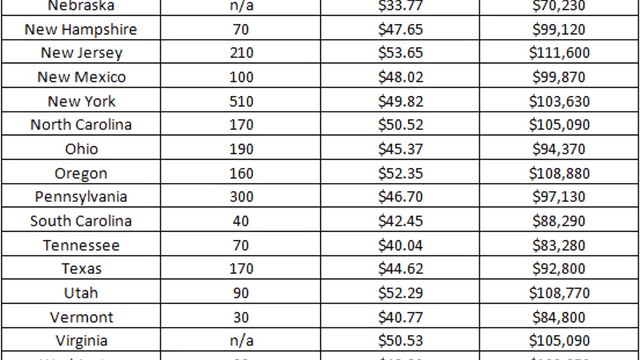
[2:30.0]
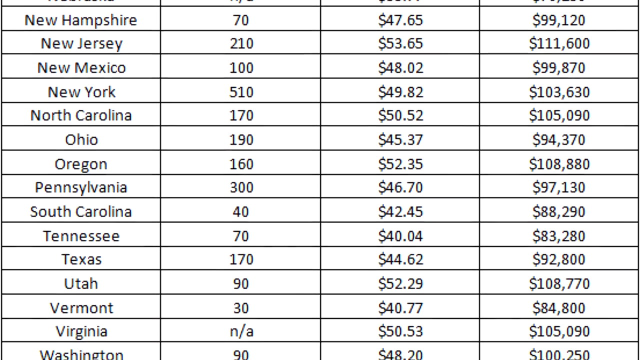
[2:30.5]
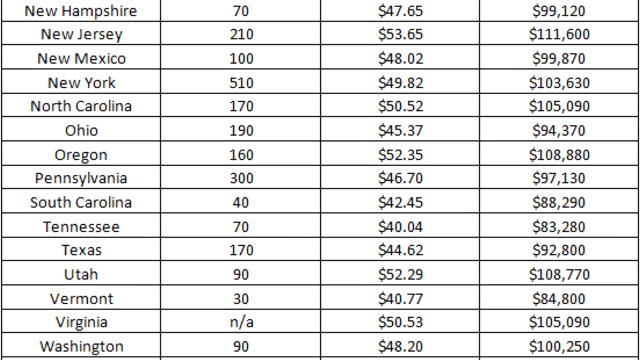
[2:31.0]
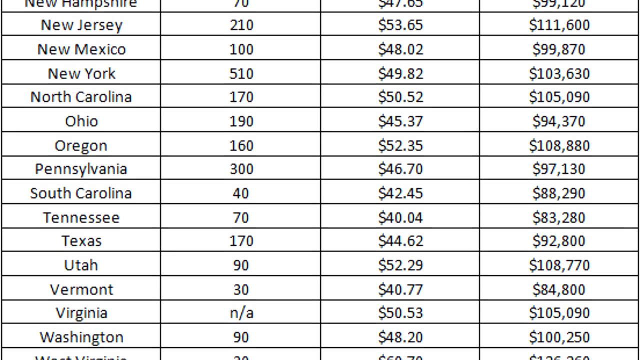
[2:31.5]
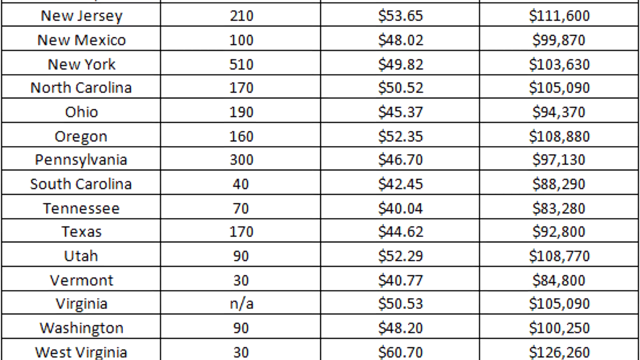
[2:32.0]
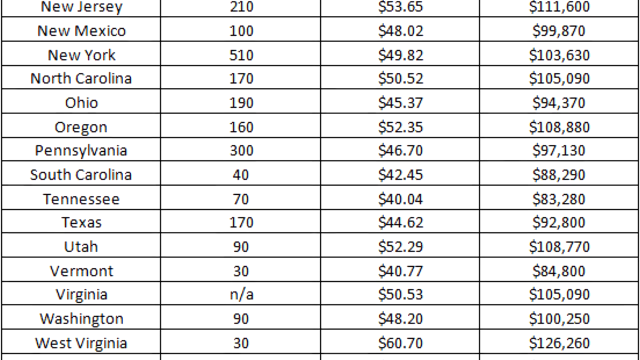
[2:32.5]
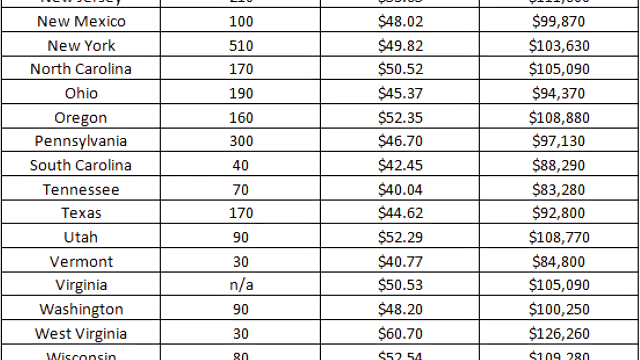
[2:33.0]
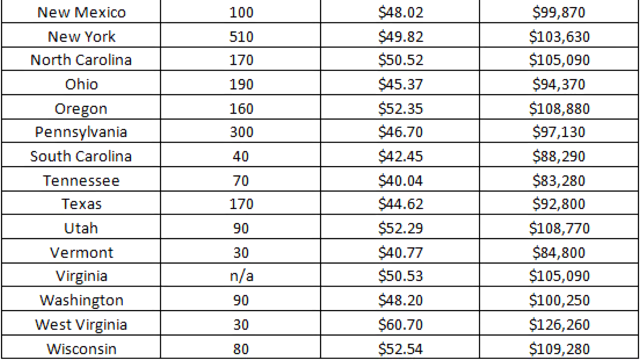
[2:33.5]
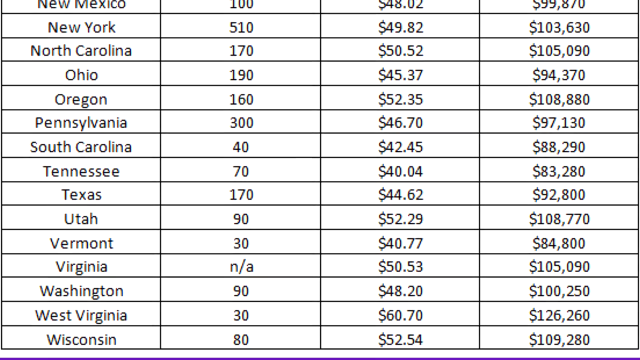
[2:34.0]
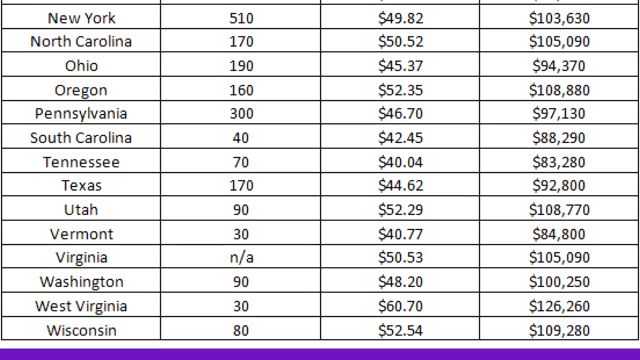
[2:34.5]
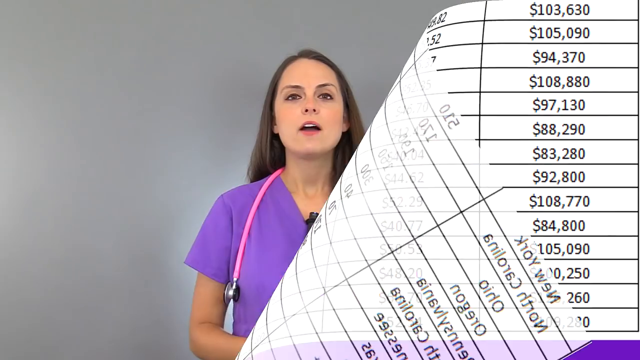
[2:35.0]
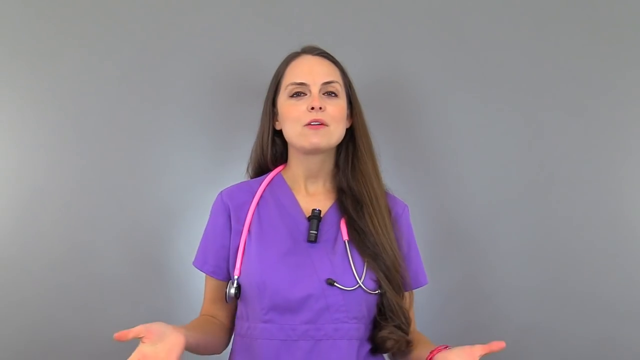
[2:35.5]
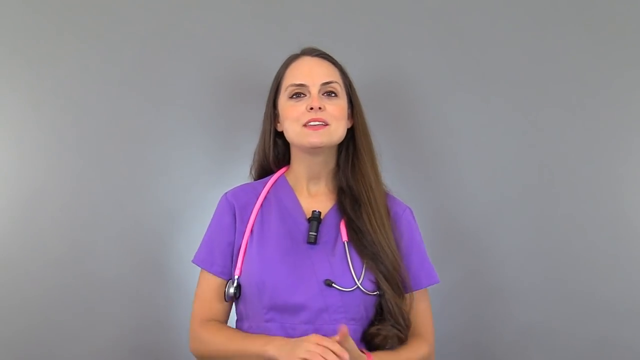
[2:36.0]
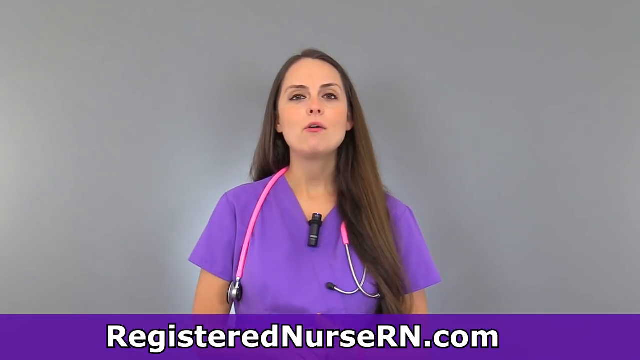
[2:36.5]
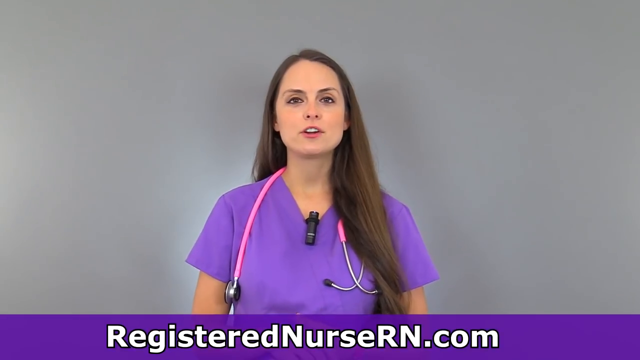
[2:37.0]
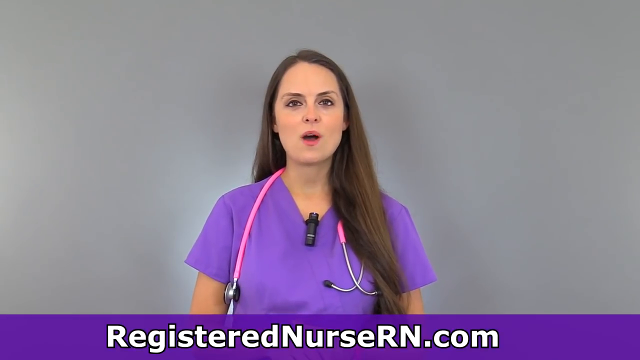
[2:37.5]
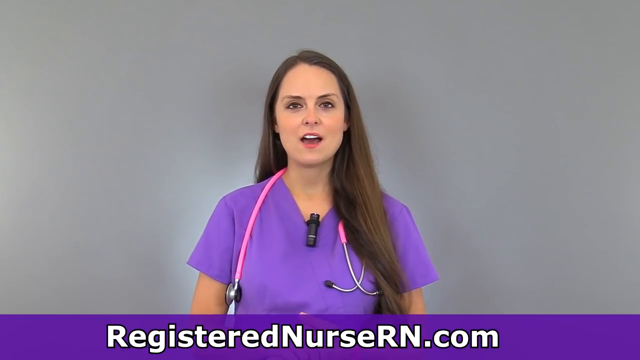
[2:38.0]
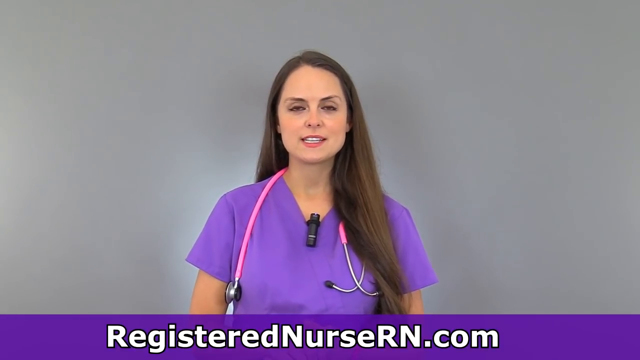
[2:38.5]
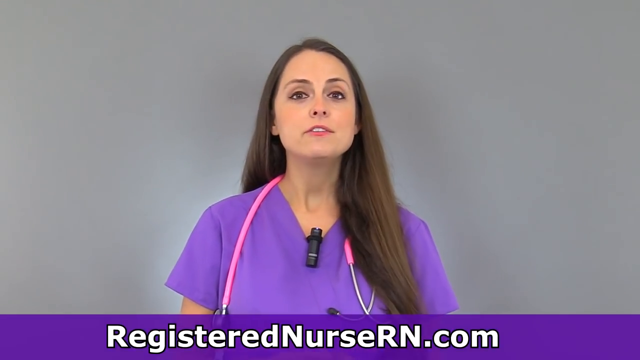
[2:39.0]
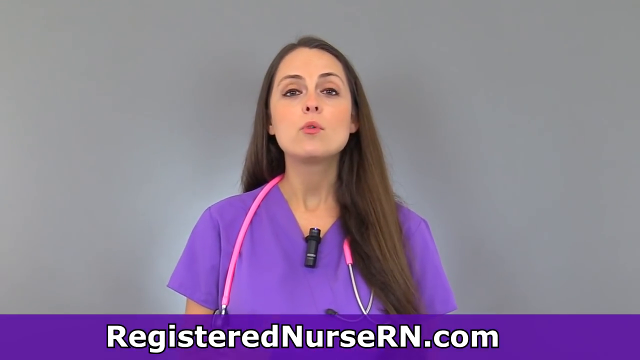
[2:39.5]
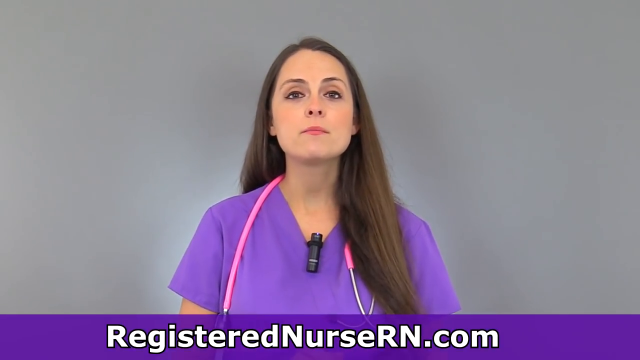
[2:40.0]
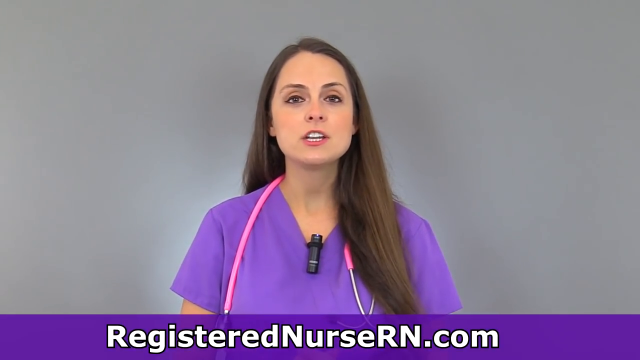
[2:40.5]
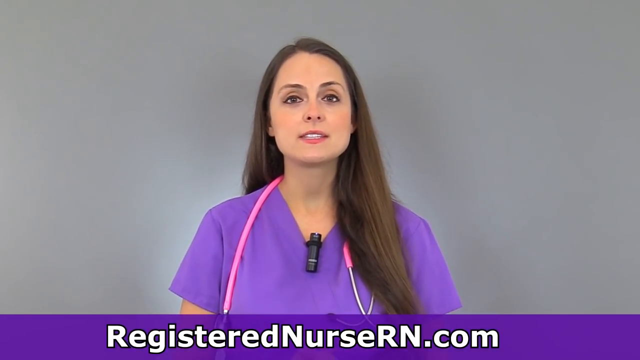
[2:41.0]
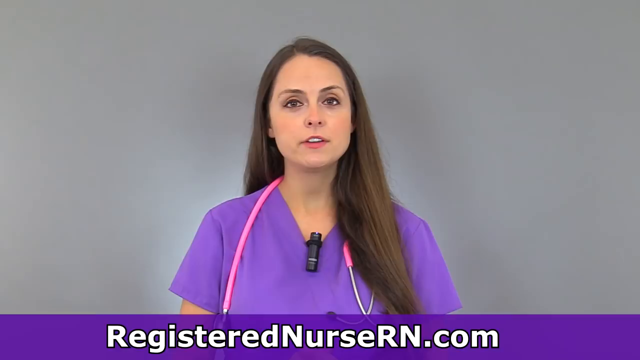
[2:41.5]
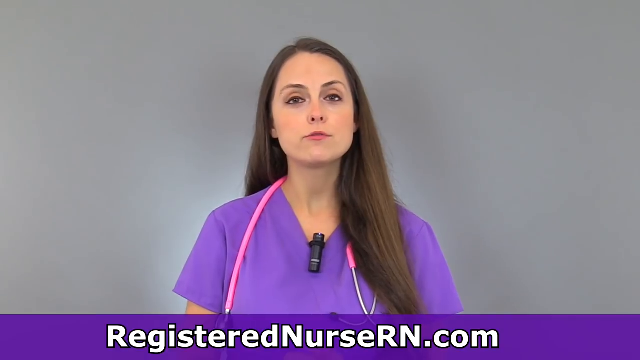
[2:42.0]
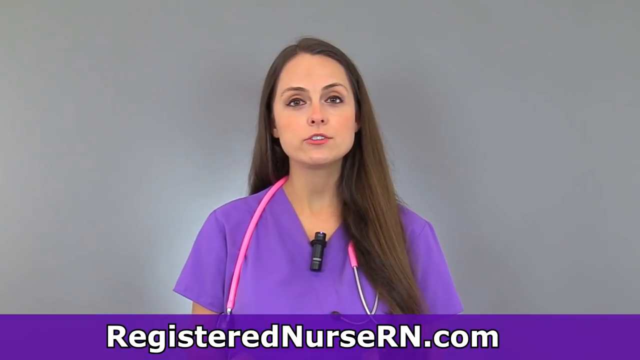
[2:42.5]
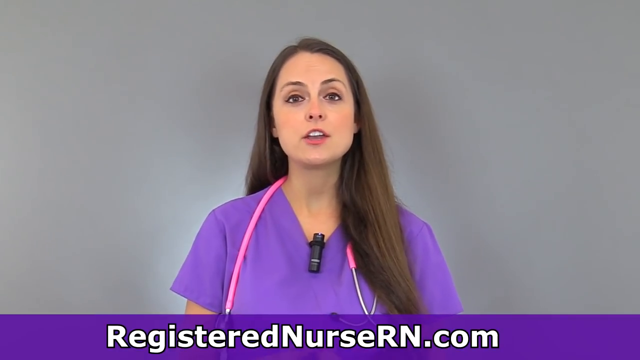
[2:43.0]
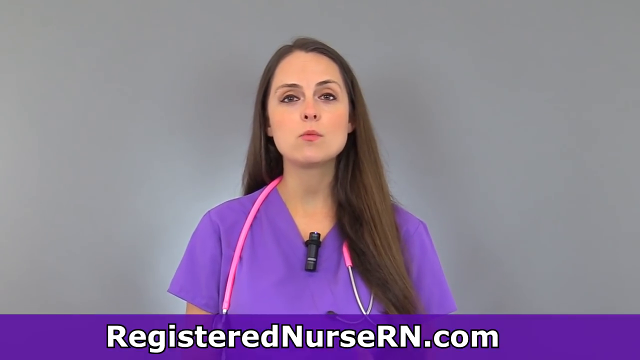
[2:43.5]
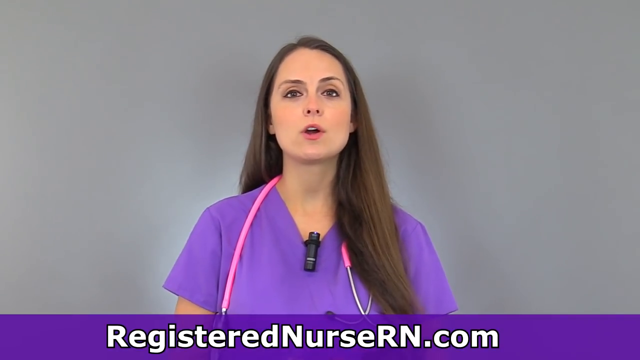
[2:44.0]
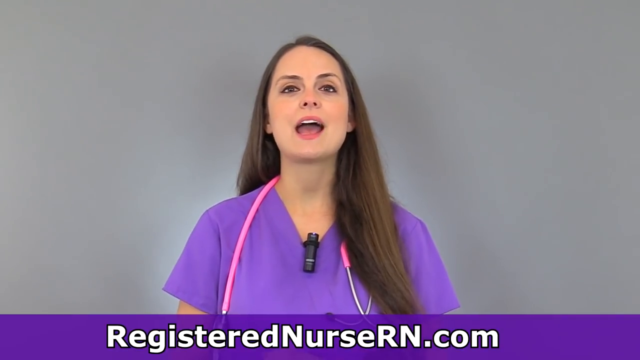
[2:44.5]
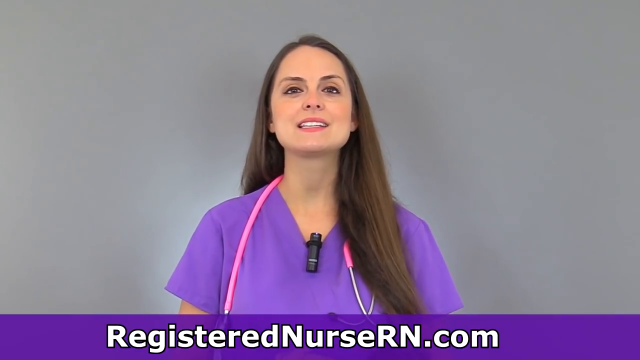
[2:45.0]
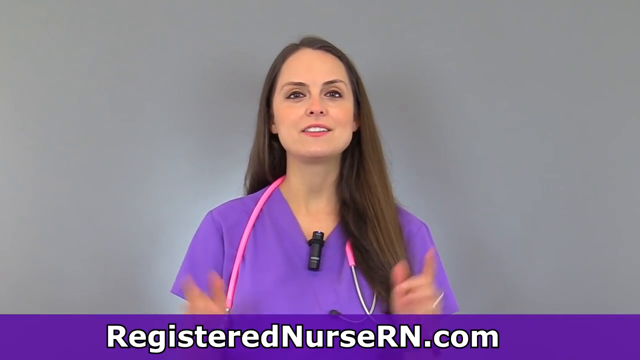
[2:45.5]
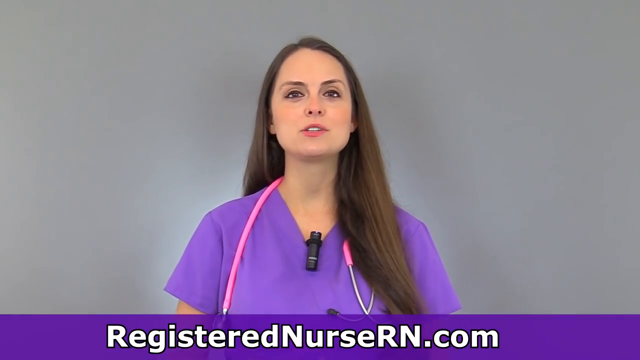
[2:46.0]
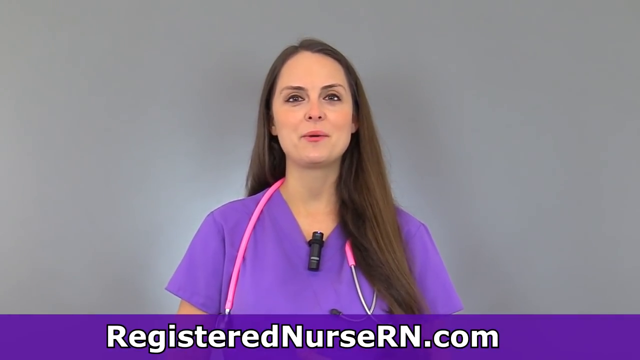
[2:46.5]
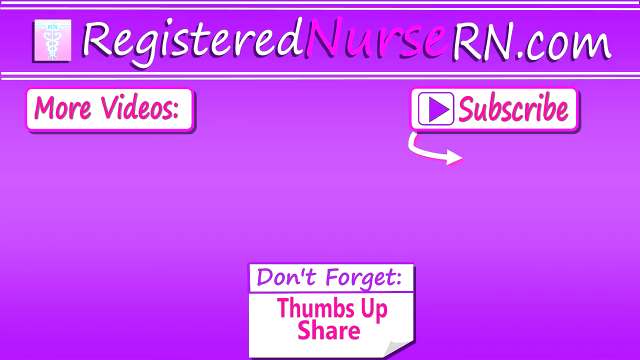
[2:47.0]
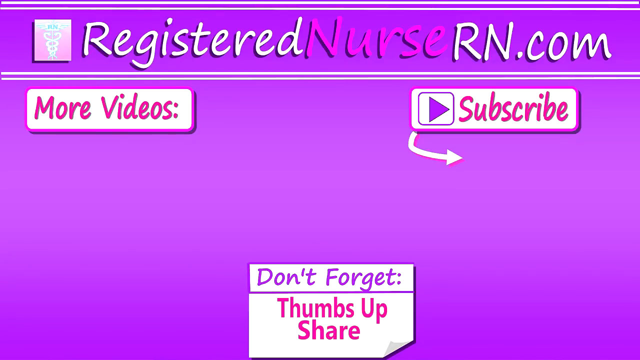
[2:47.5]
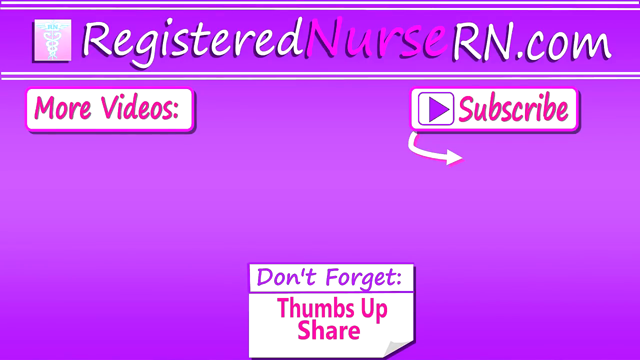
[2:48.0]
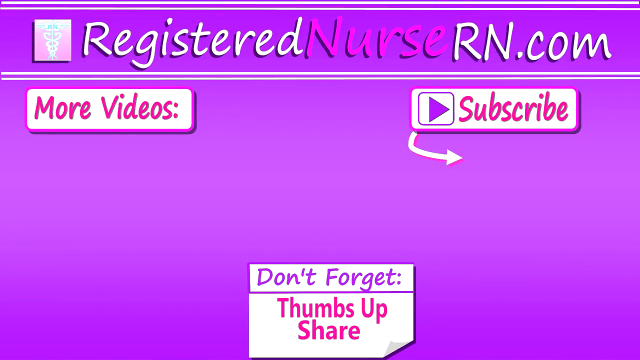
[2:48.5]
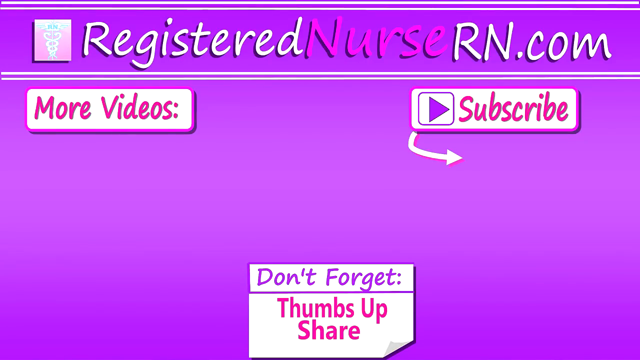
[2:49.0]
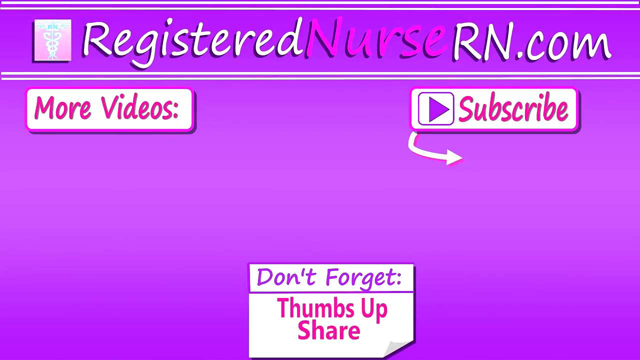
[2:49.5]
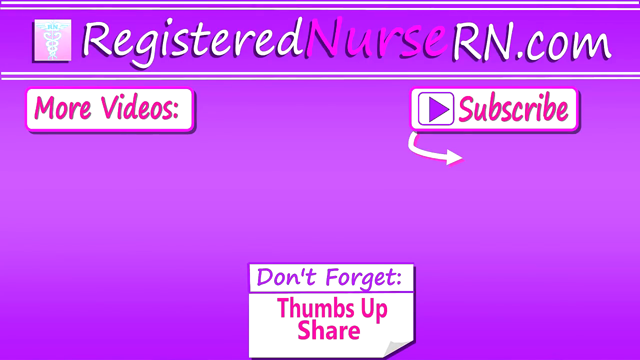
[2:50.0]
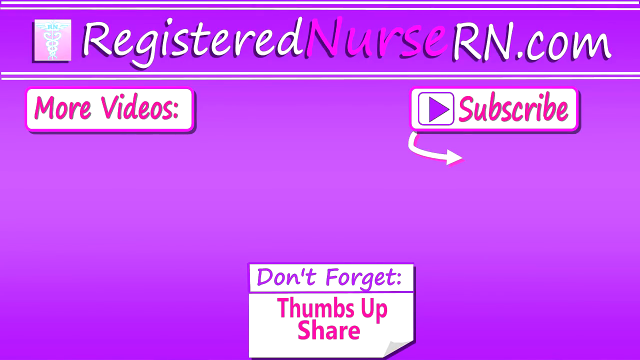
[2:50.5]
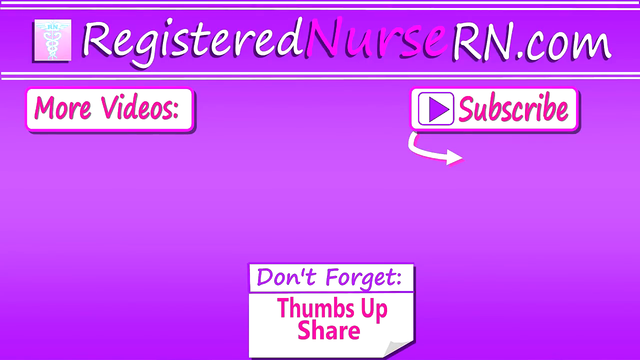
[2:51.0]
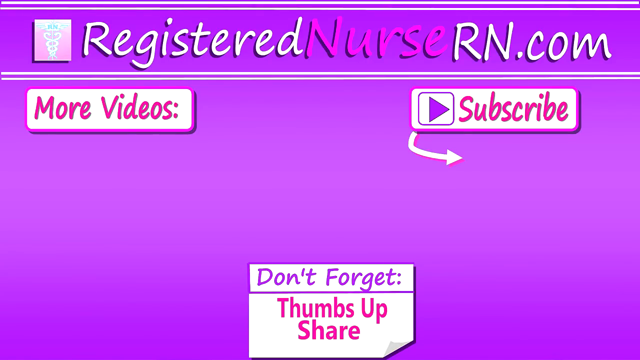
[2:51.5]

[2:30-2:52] The chart continues to scroll; the top of the screen starts with Nebraska, with NA under employment, followed by New Hampshire, New Jersey, New Mexico, New York, North Carolina and Ohio. The video then returns to a full screen of the nurse speaking to the camera, wearing a purple scrub top with a pink stethoscope around her neck. She has long brown hair parted to the right, and a purple banner beneath her reads "registerednursern.com." She continues speaking to the camera, tilting her chin up as she speaks in an excited manner. Next comes a purple screen with a medical symbol at the top, two snakes swirling around it. Next to it is "registered" in white and "nurse" in pink. On the left below that is "more videos," and on the right under the "RN.com" is a subscribe button. At the bottom, a rectangle reads "don't forget, thumbs up, share," with "don't forget" in purple and "thumbs up" and "share" in pink.